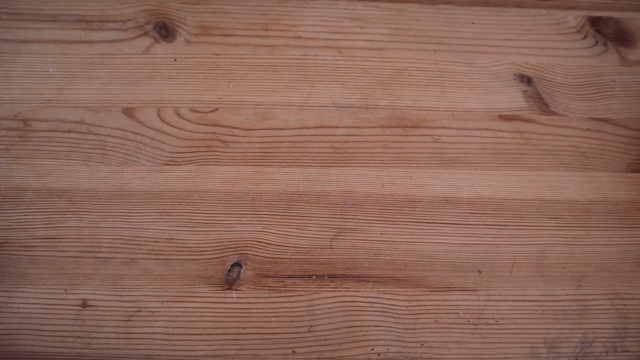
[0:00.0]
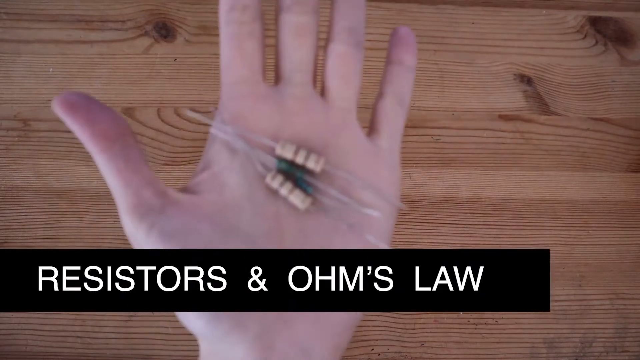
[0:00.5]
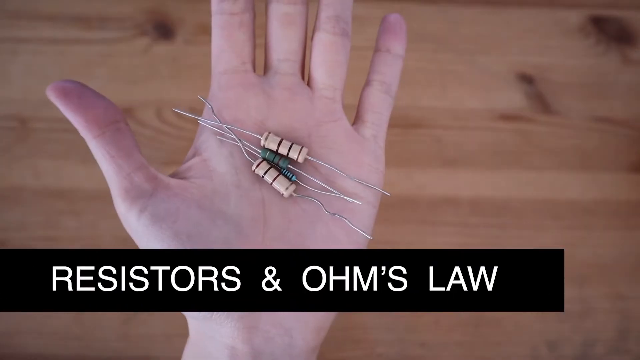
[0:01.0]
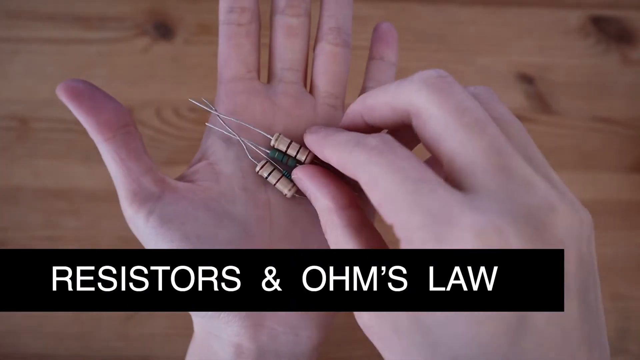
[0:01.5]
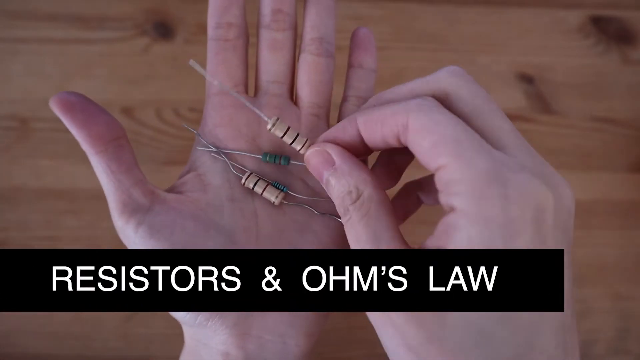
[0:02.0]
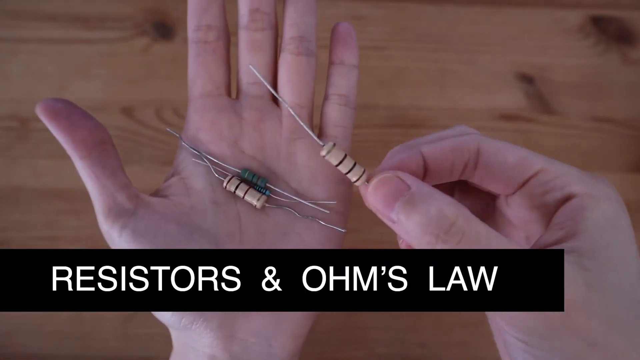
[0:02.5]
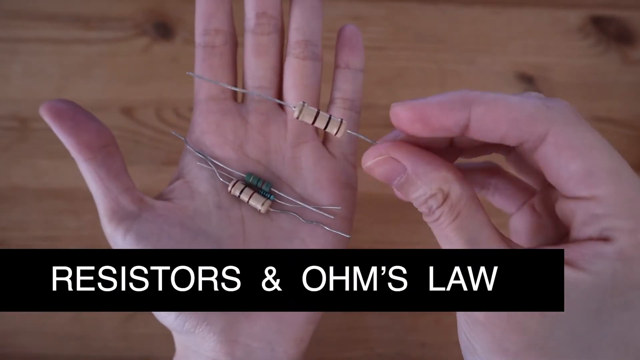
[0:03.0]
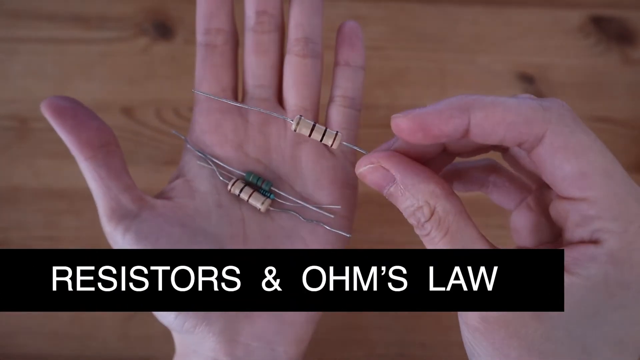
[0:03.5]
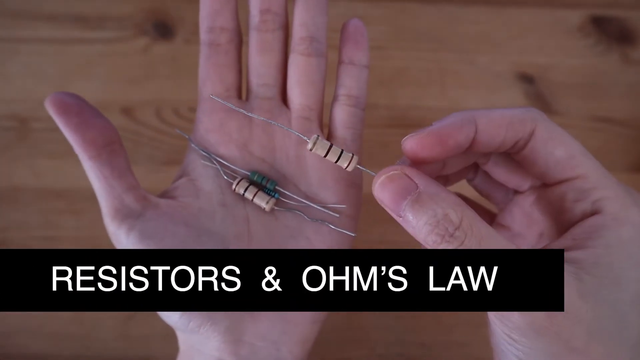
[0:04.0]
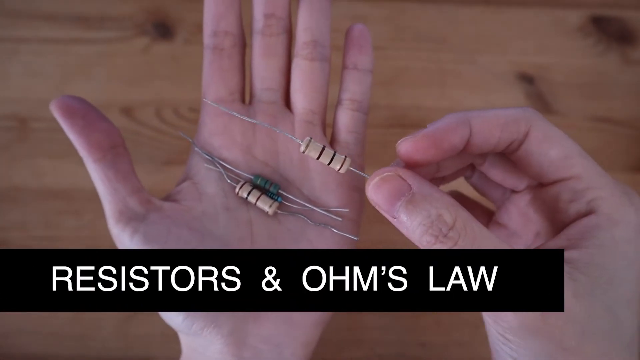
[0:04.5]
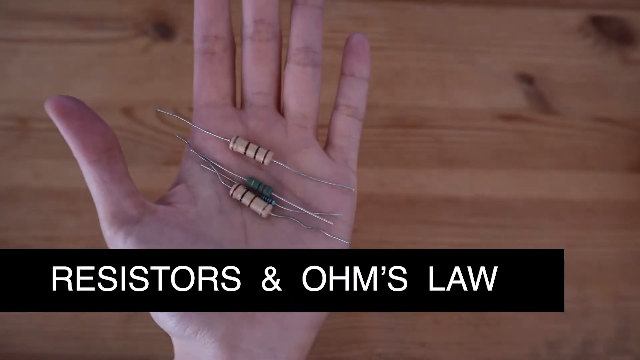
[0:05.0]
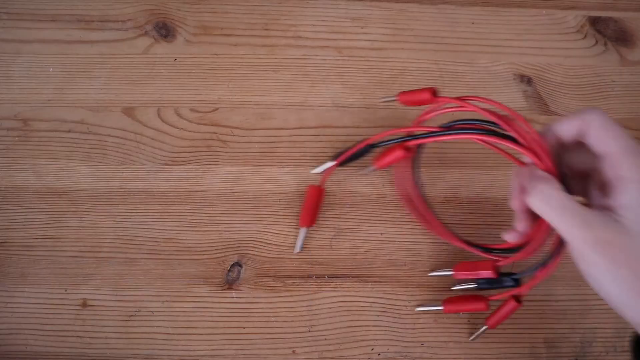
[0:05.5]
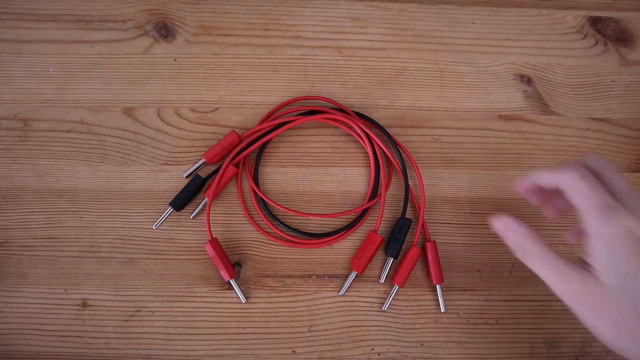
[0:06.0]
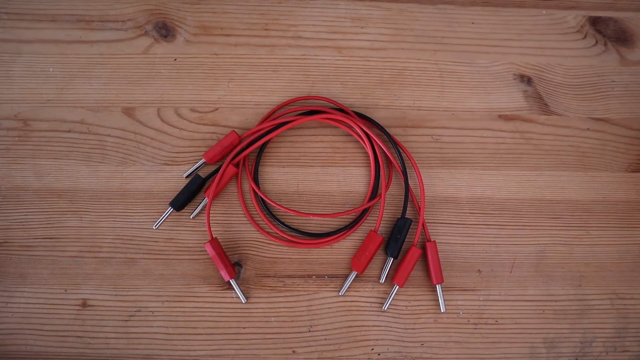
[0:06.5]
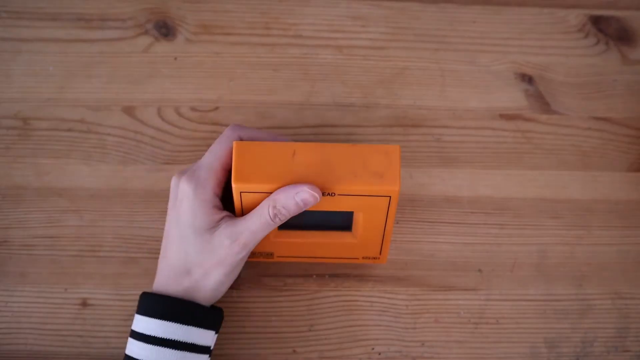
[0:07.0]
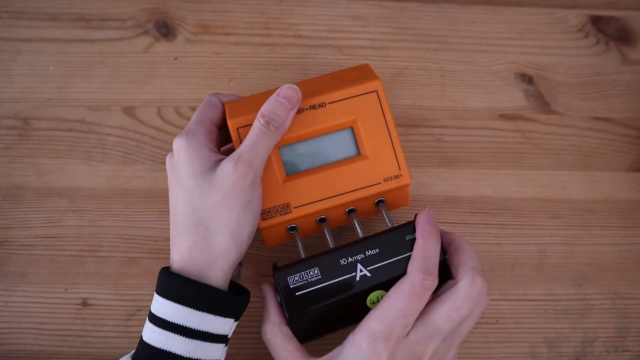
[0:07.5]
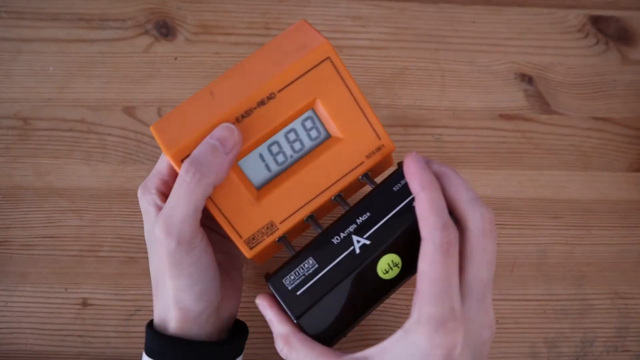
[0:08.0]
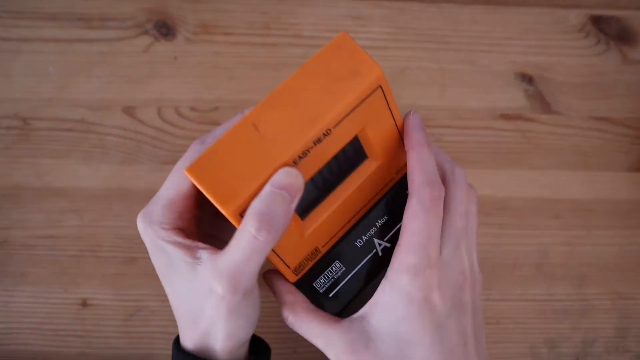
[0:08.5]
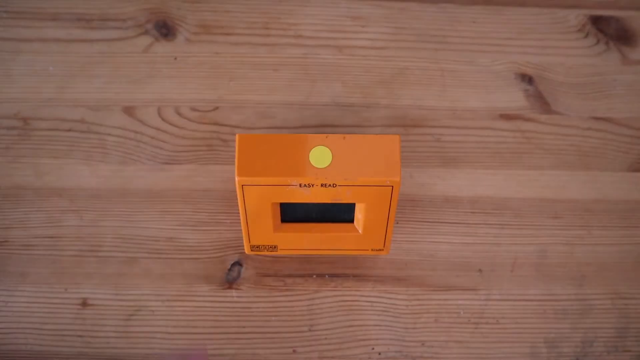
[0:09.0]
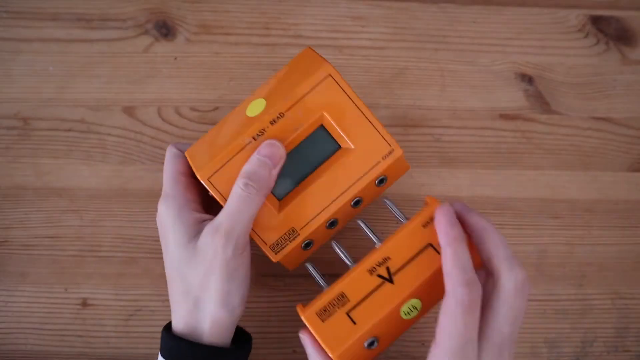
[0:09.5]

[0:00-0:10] A wooden table is shown, and a left hand comes into view holding some wires with bits of plastic on them, while the text "resistors and OHMs law" appears. The right hand comes in, picks up one of the wires that has a creamy brown material in the middle, and moves it around, looking at it. The hand then closes and moves away, and the right hand puts a bunch of red and black wires onto the brown table. An orange box with a black plug-in in it appears, followed by another box with an orange plug-in in it. Hands plug these extra pieces into the orange box, the black plug-in and then the orange plug-in, but what happens with them is not shown.